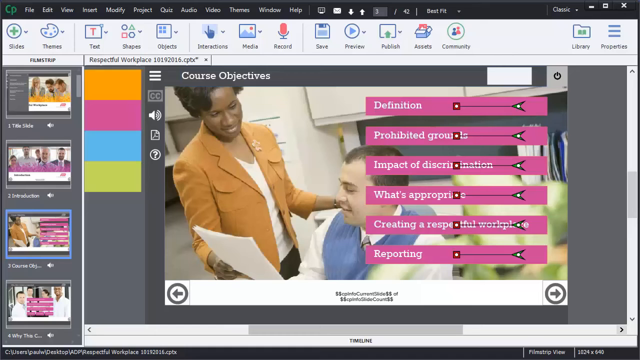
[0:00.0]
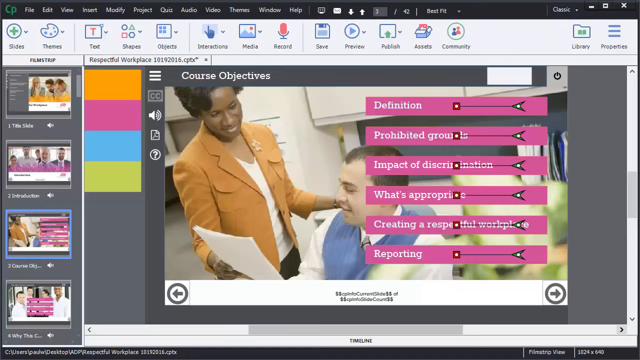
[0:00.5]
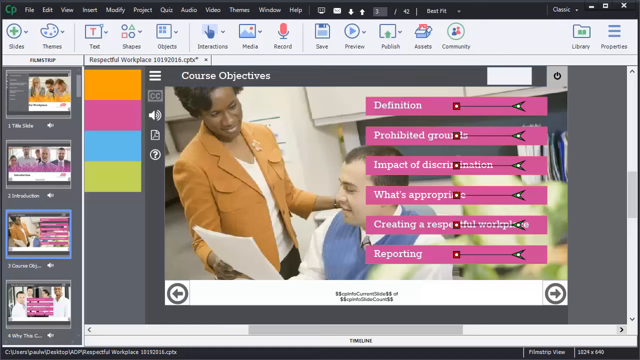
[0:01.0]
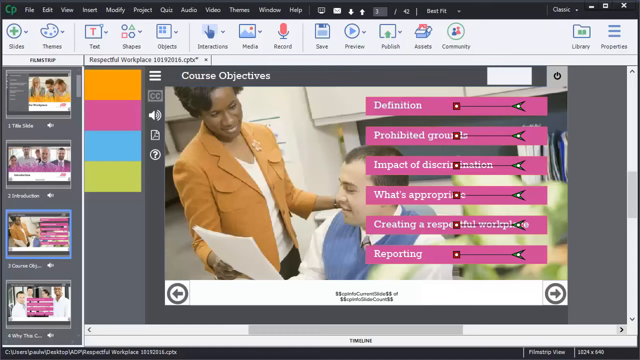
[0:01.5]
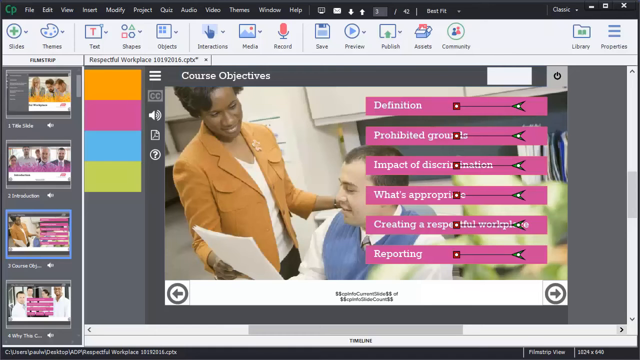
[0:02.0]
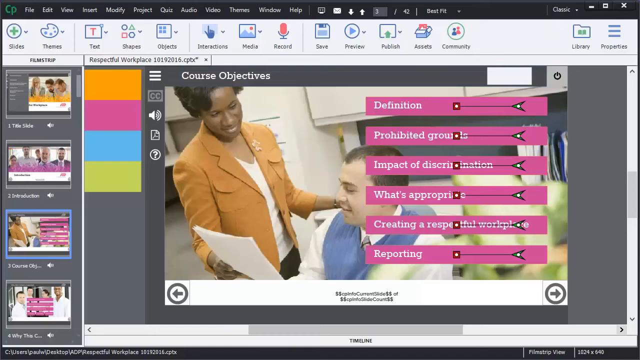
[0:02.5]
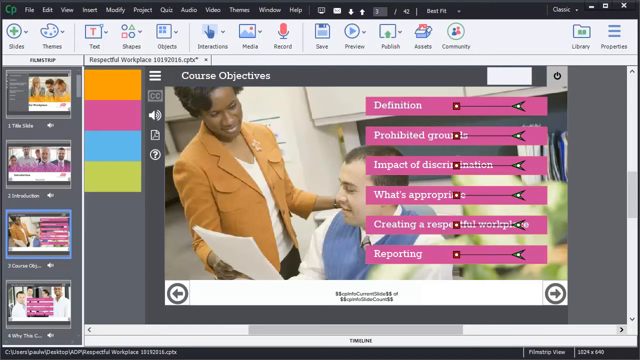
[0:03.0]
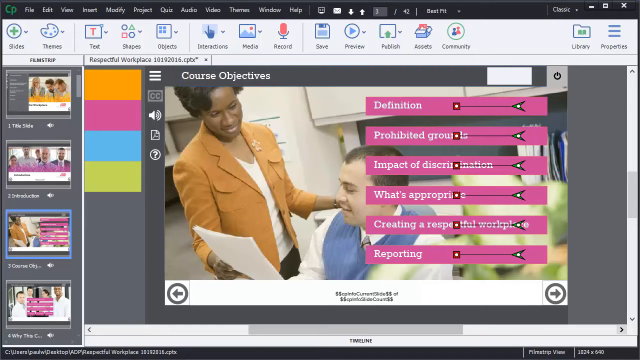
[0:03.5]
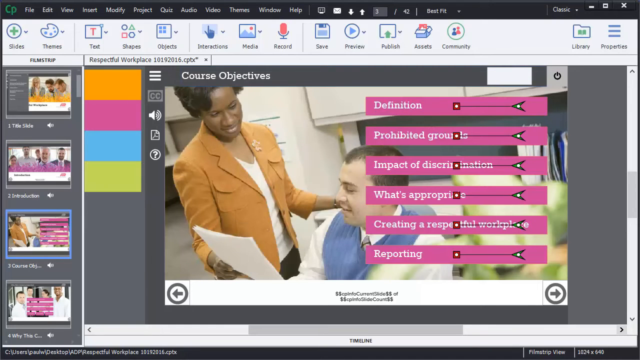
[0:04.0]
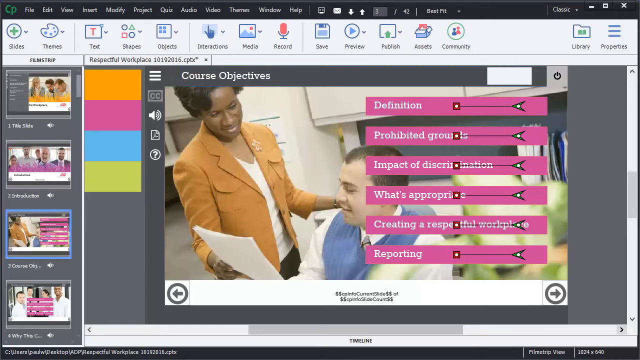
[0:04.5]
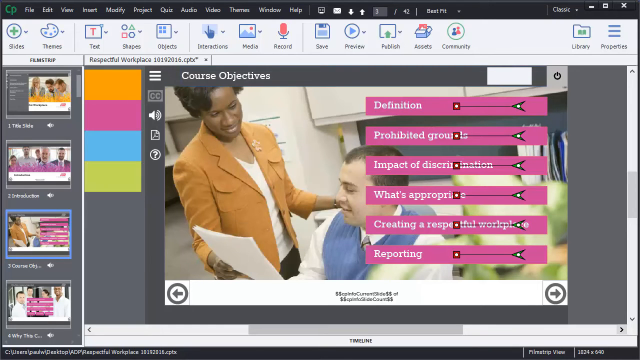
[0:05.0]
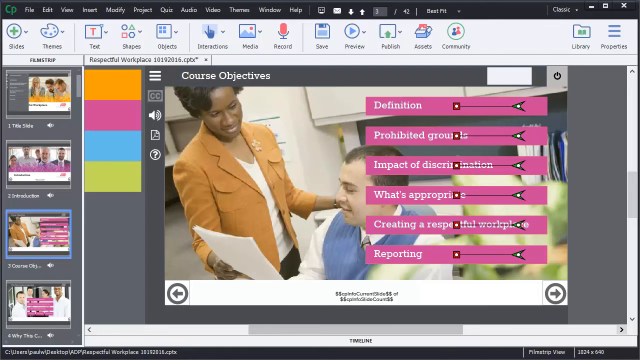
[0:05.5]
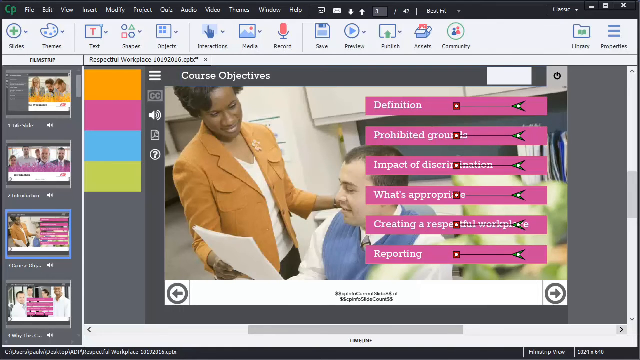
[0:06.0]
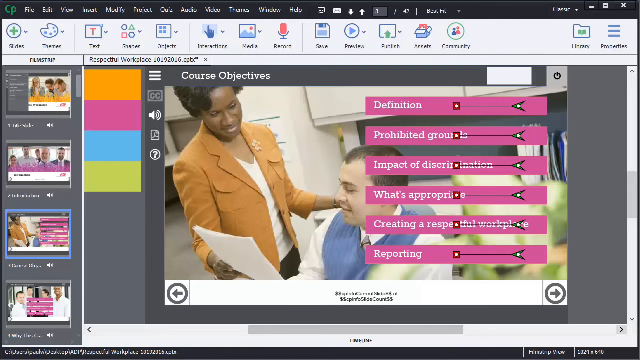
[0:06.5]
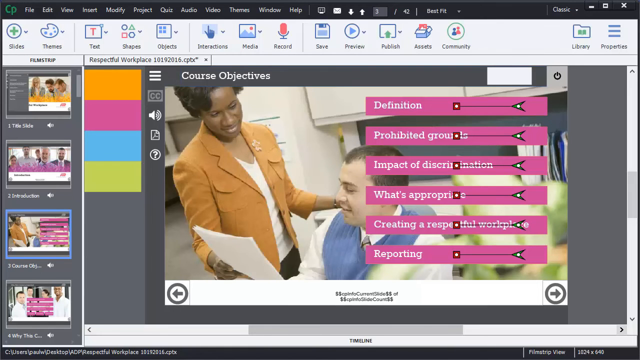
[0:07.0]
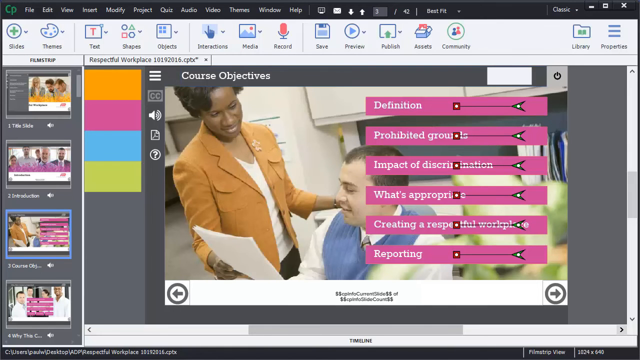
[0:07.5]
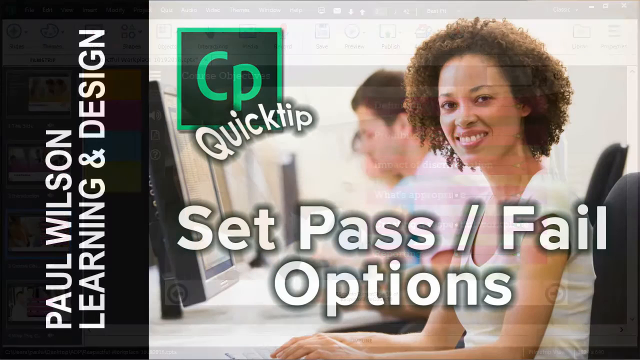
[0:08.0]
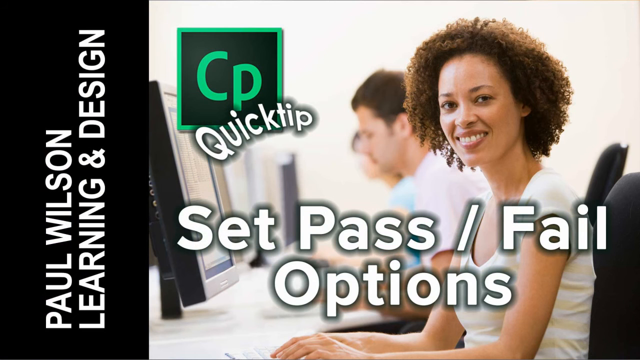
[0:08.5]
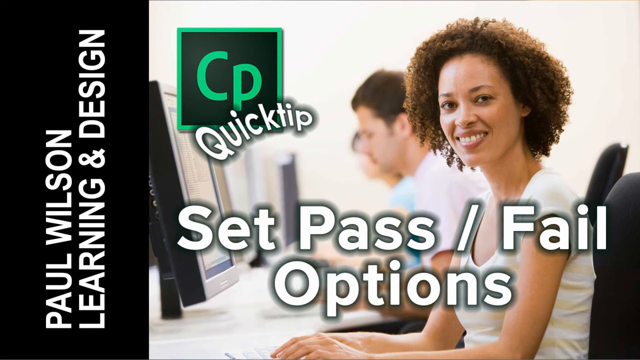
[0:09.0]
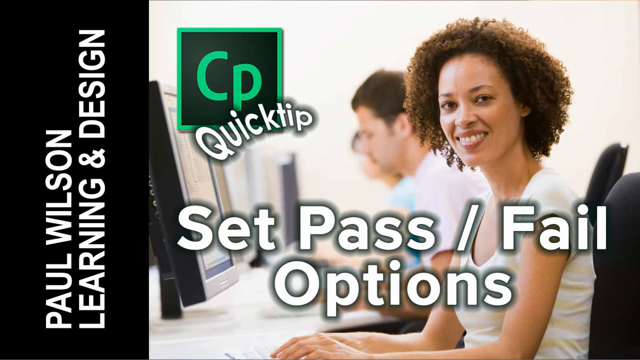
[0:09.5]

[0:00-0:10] What appears to be a slide presentation opens on a slide titled "course objectives" that features a couple of individuals discussing. On the left side, pinkish rectangles hold the text points "definition", "prohibited grounds", "impact of discrimination", "what's appropriate", "creating a respectful workplace" and "reporting". The presentation then transitions to another slide with the prominent text "cp quick tip set pass/fail options", and in the rectangle on the left side "Paul Wilson learning and design" runs vertically from bottom to top. The palette is quite colourful, with orange, pink, blue and green highlighted as representative colours of the presentation.